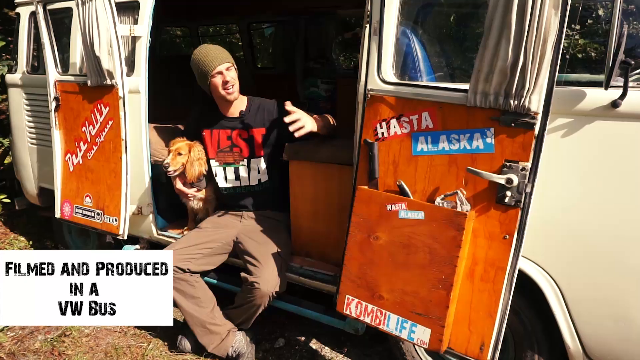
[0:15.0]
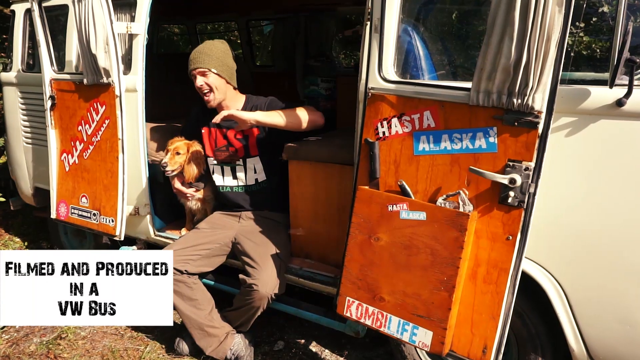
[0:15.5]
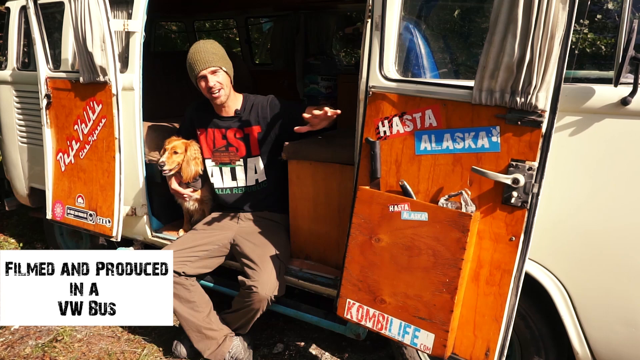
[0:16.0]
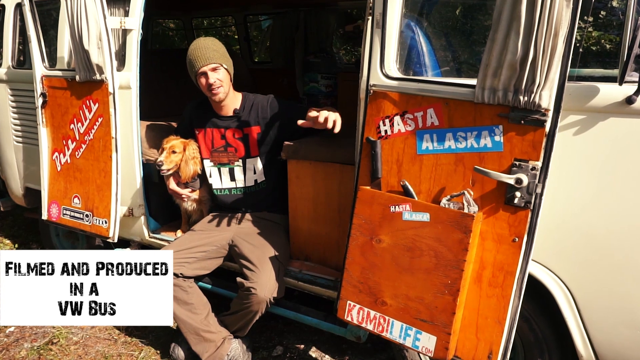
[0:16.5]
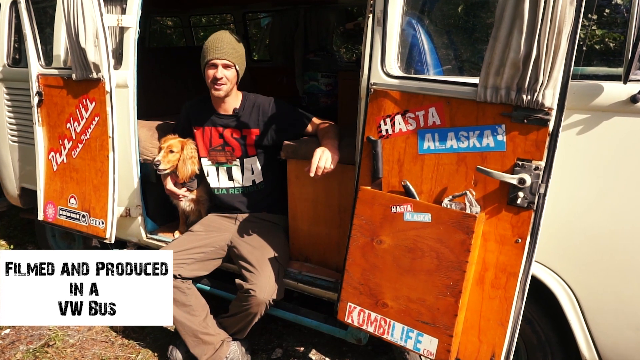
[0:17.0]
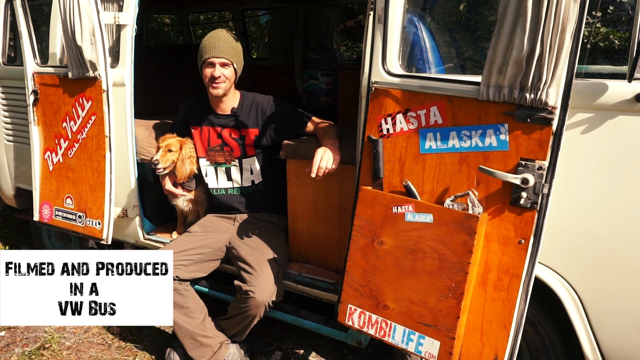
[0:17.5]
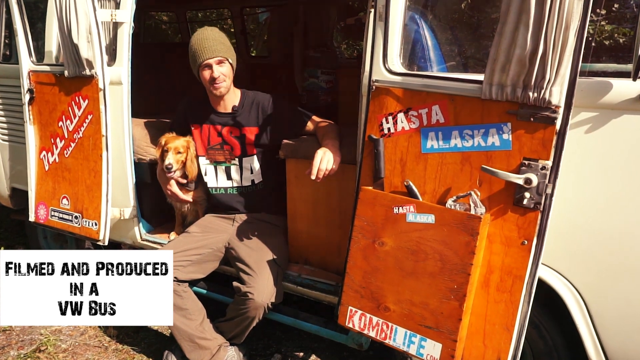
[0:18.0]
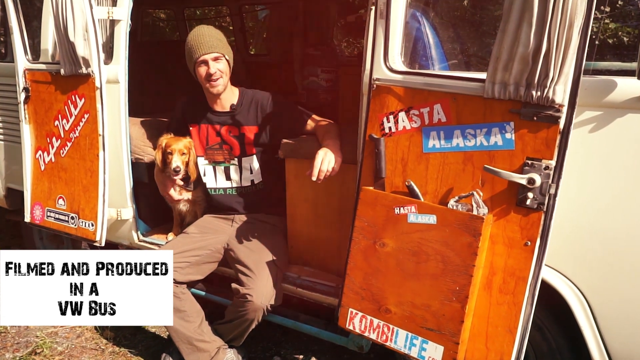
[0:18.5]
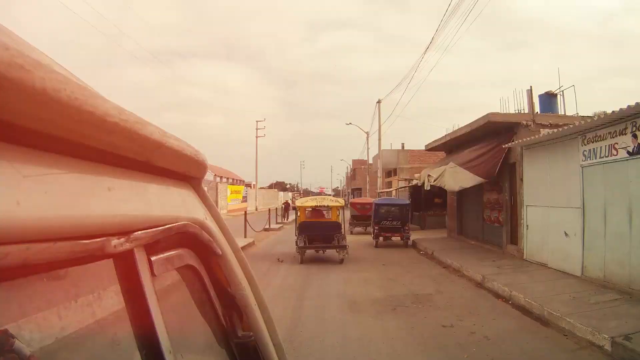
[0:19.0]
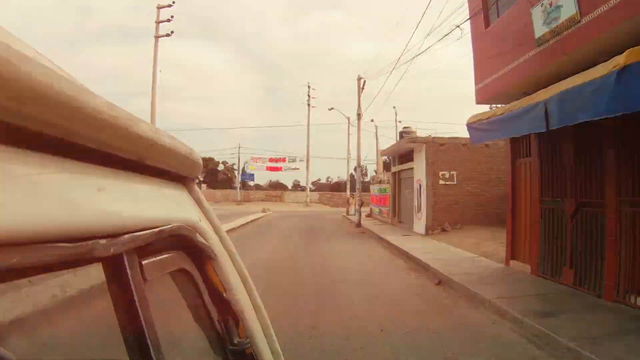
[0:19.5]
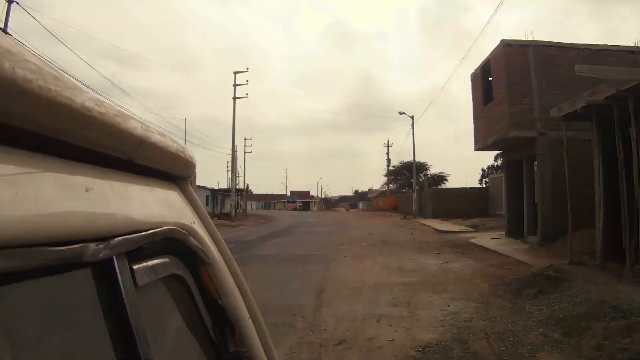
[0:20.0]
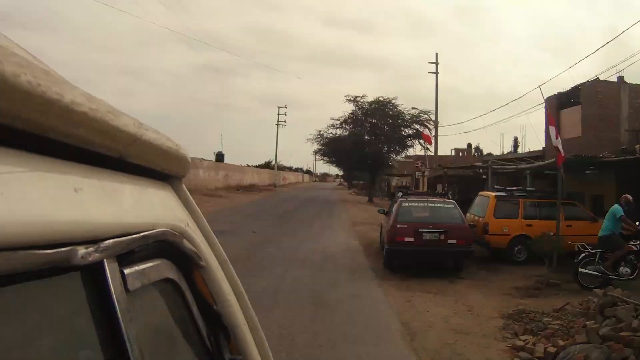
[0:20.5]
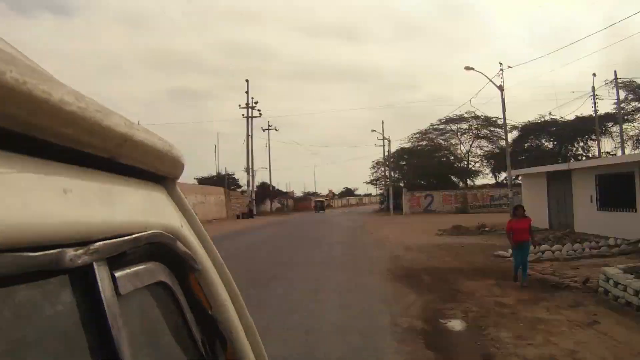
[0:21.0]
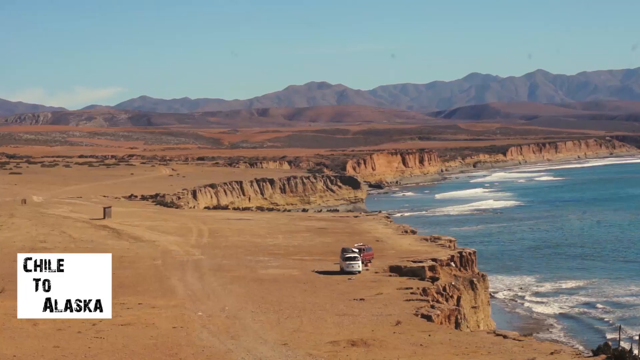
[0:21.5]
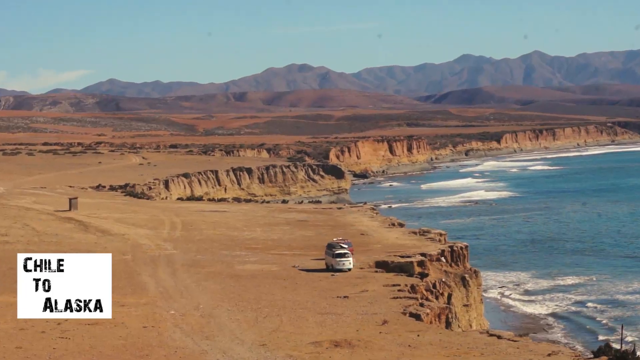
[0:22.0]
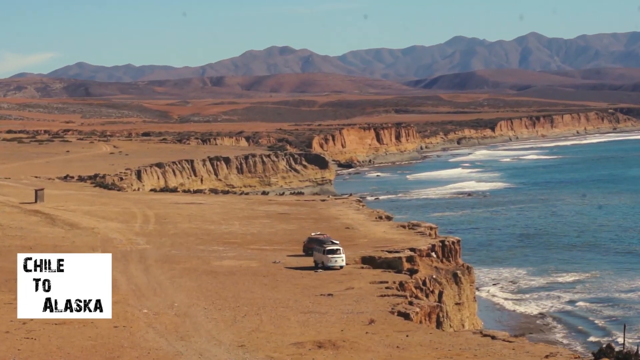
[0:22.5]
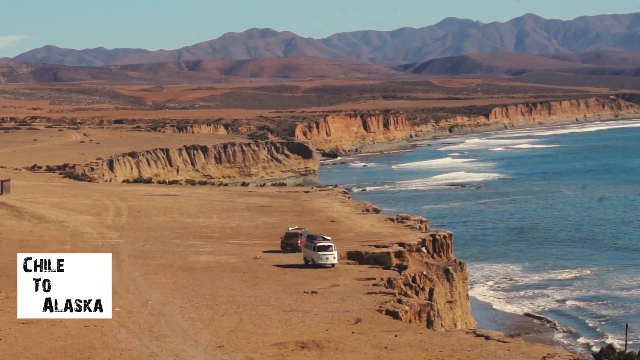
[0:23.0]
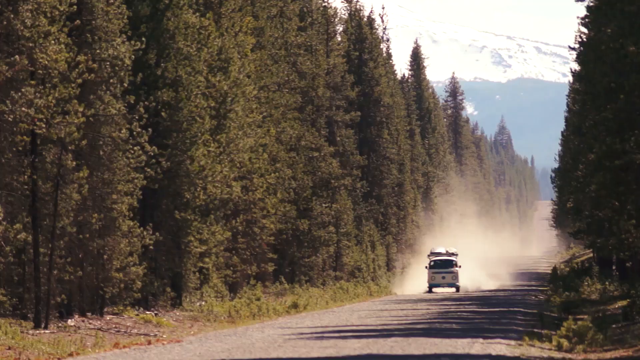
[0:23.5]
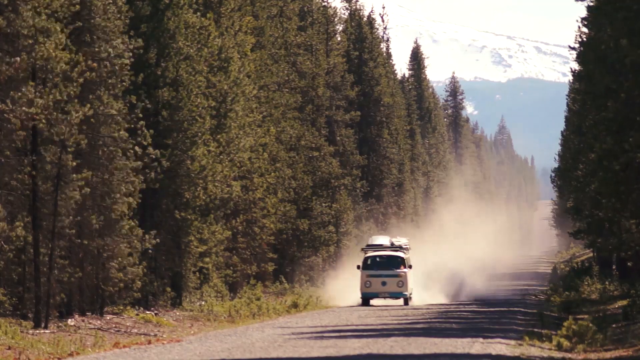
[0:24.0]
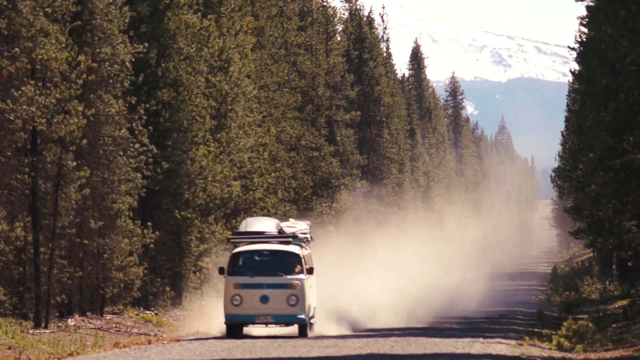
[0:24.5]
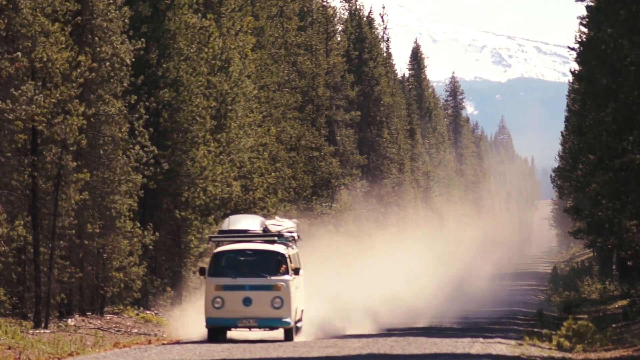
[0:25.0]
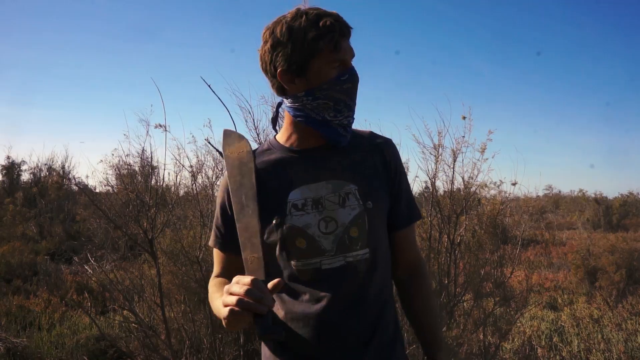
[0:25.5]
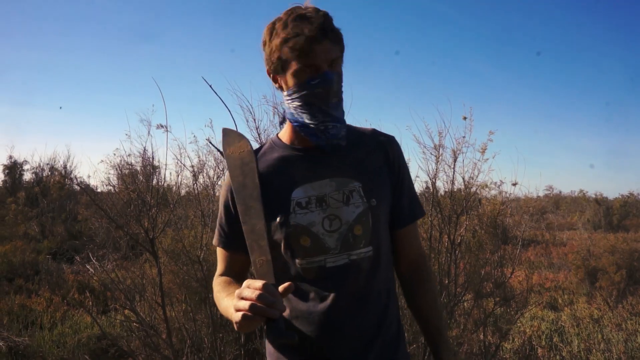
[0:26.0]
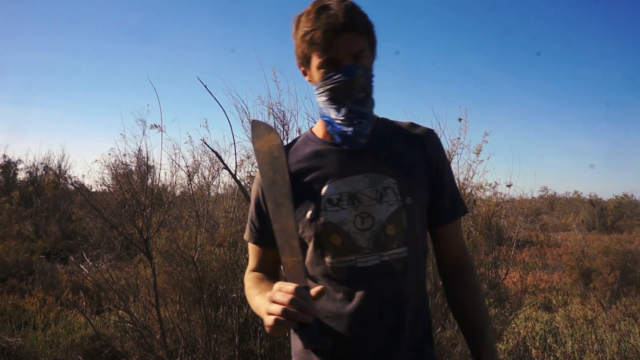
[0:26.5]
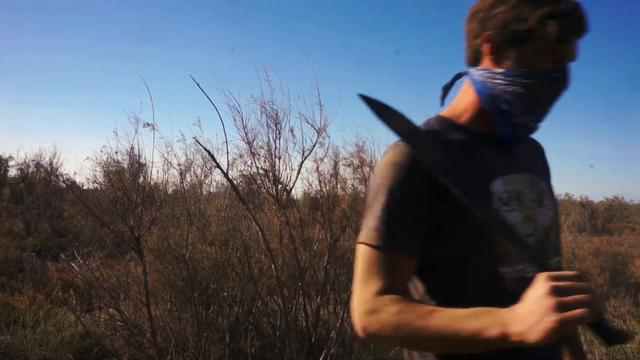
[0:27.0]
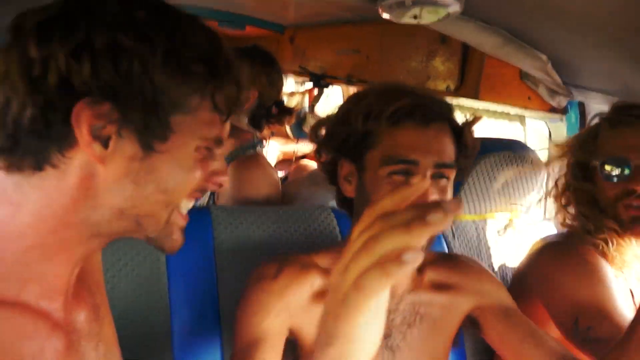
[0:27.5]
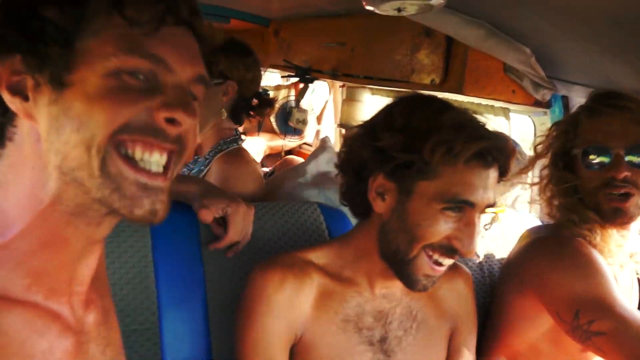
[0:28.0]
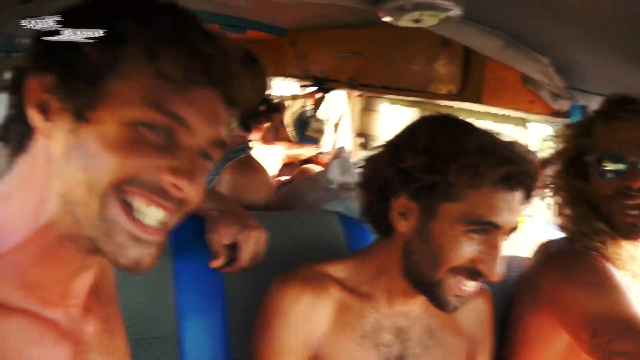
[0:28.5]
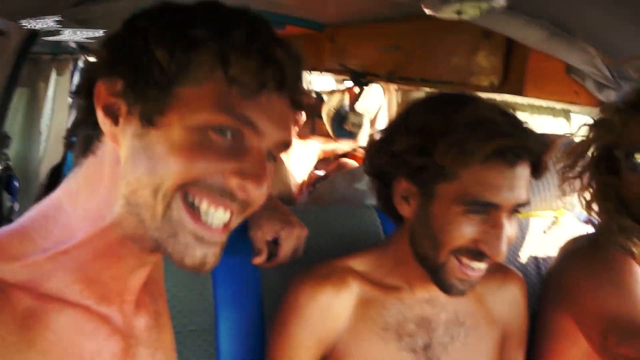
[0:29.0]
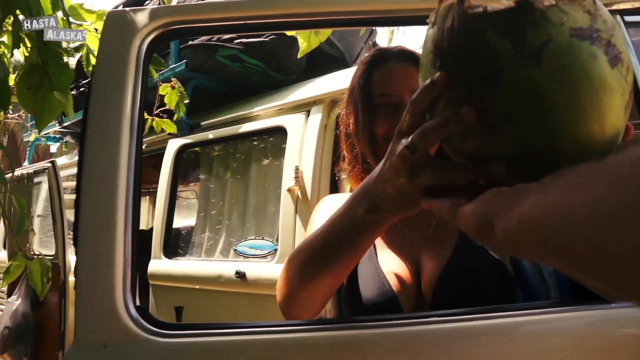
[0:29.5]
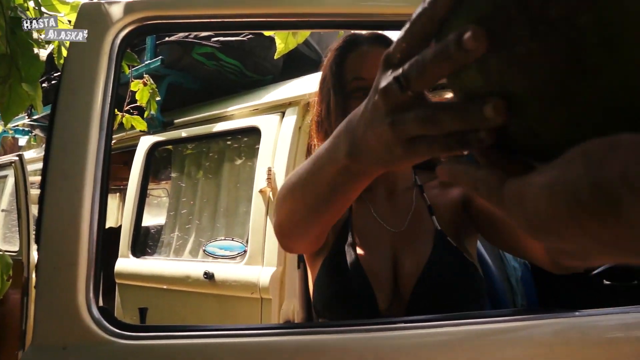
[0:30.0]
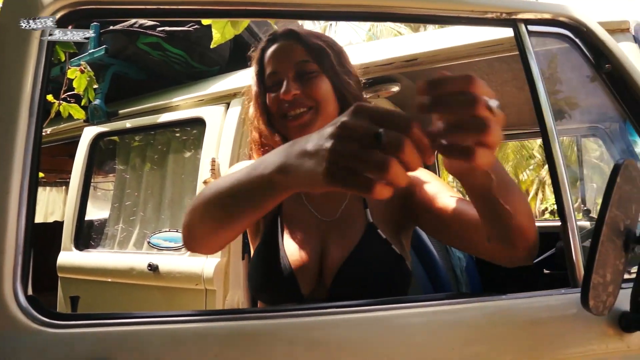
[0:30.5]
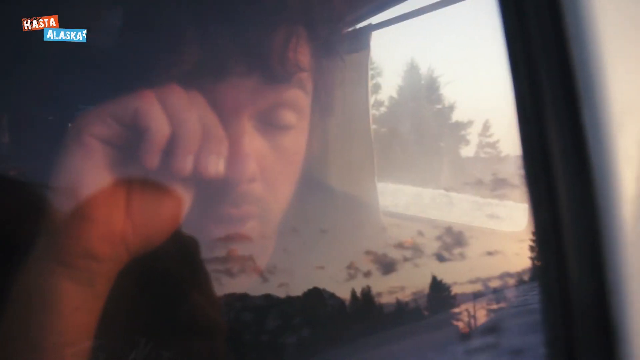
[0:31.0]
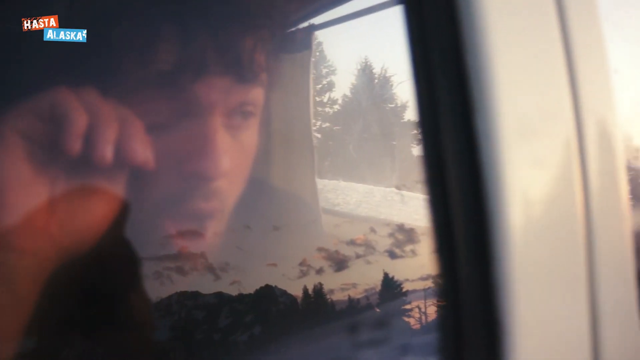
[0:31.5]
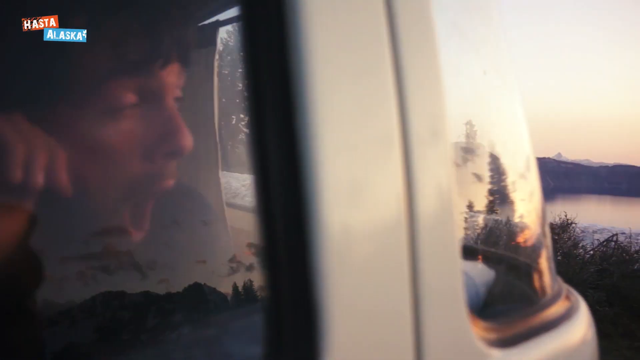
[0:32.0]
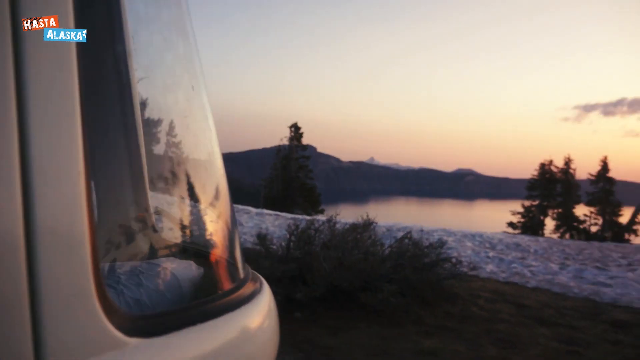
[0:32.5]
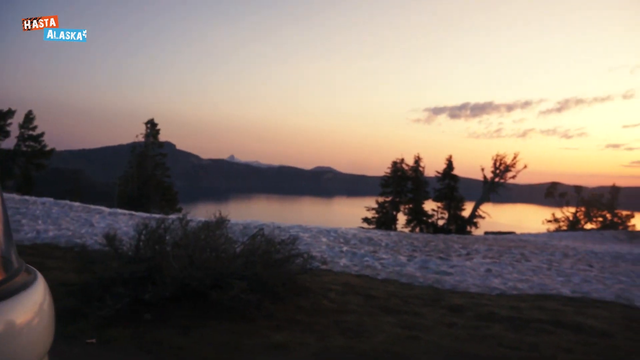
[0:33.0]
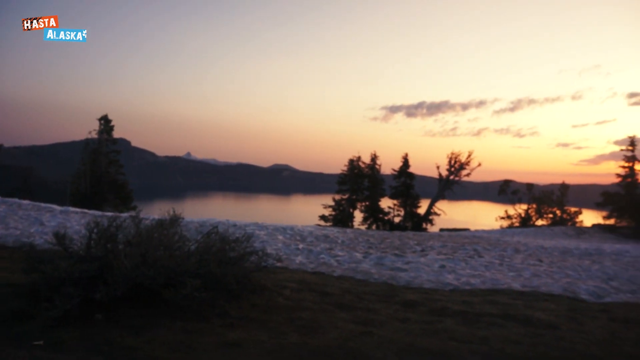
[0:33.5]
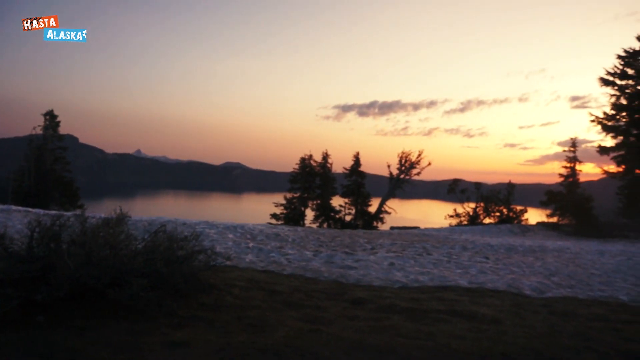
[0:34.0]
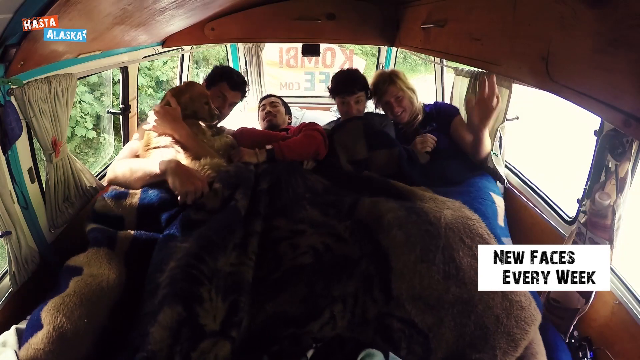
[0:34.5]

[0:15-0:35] Ben talks, gesturing with his hand. Footage follows of the van driving down a road through a city. He has a machete. A bunch of people are in the van playing with a green coconut. Ben wakes up, and four people are sleeping in the van, which looks very cramped. Then they seem to have moved on to the beach, apparently showing different places they have been. Alaska is not seen in the van with the other people, only in the front. The van has wood panels on the inside and is outfitted as a camping van; it is white with a blue bumper. At one point it looks like they are being followed by another van that is red. The subscribe button shows up.